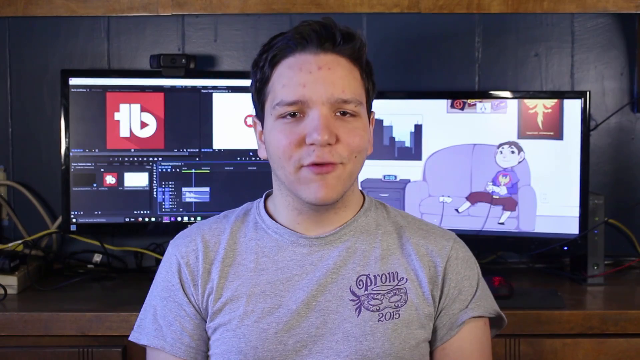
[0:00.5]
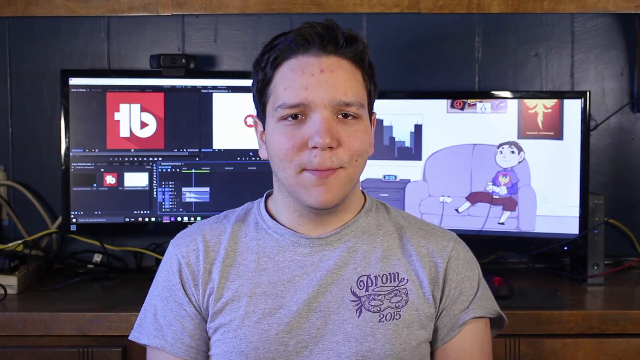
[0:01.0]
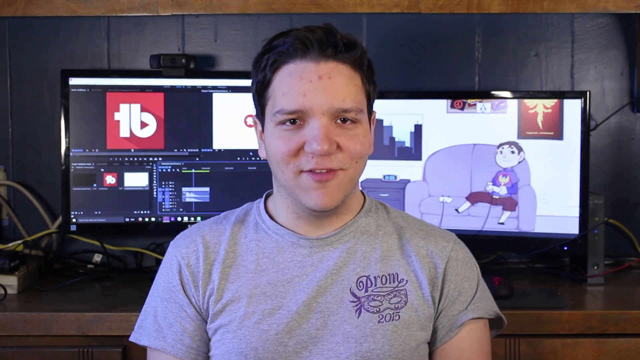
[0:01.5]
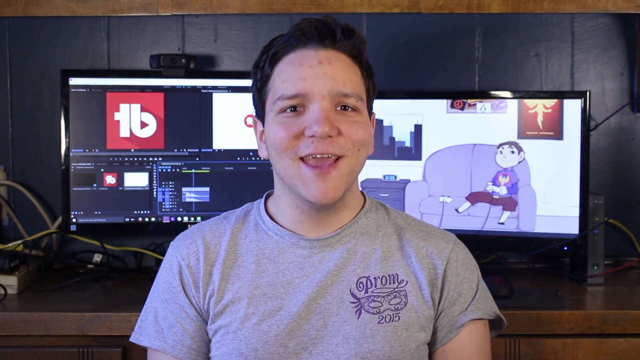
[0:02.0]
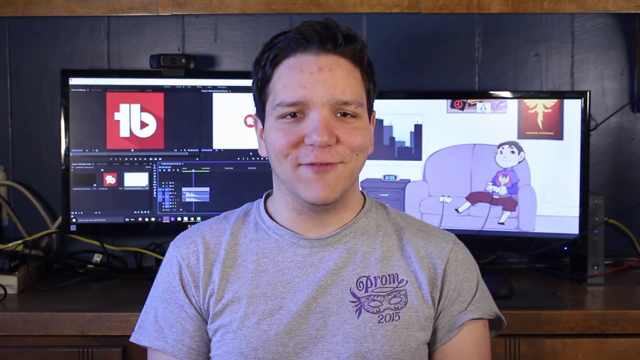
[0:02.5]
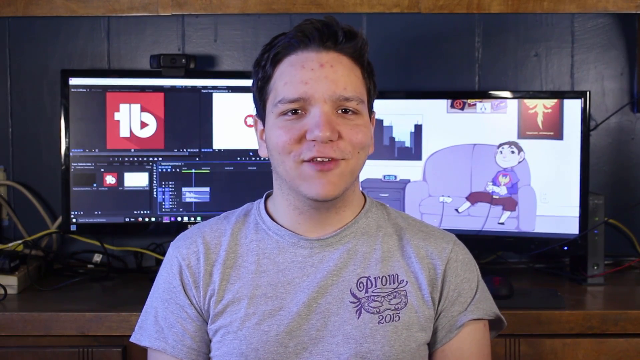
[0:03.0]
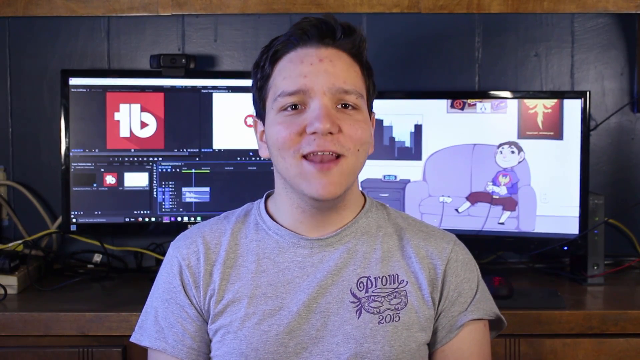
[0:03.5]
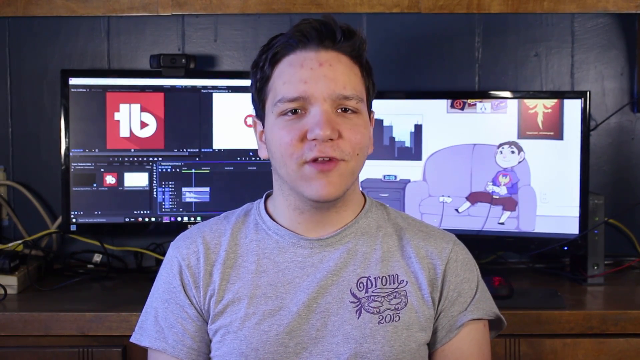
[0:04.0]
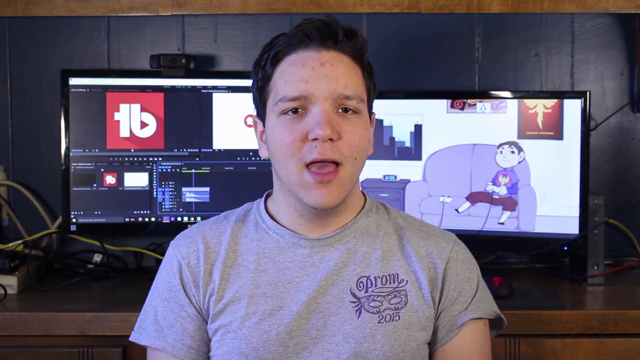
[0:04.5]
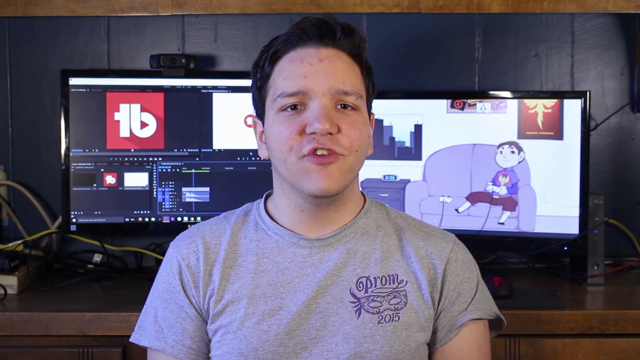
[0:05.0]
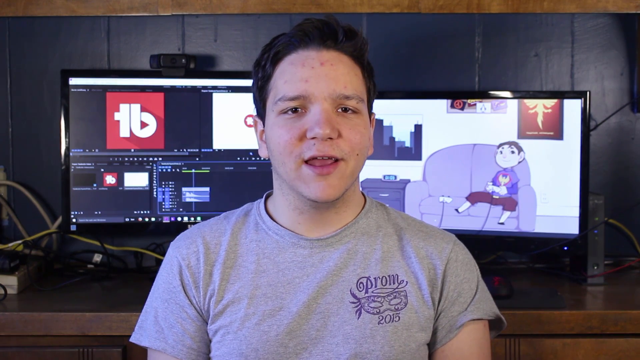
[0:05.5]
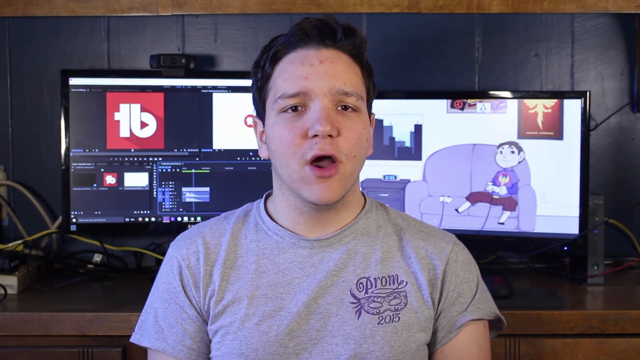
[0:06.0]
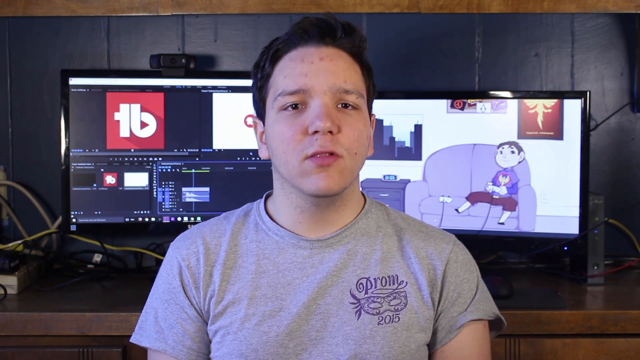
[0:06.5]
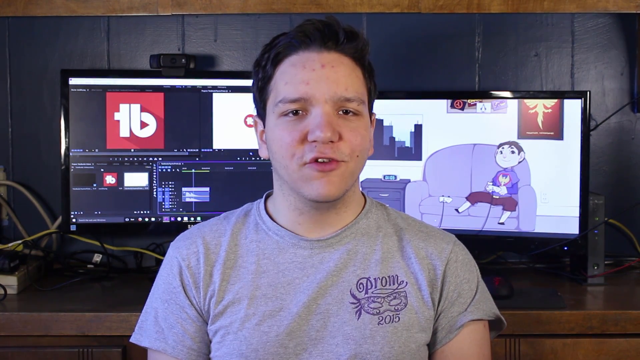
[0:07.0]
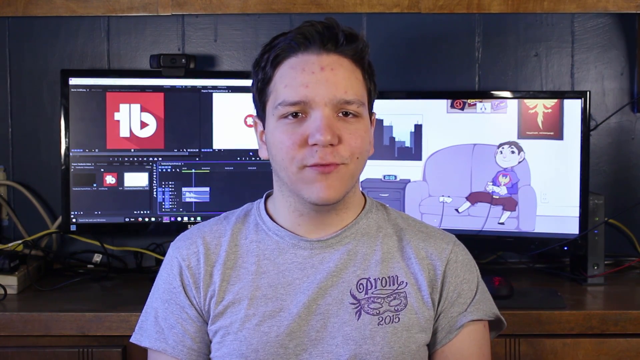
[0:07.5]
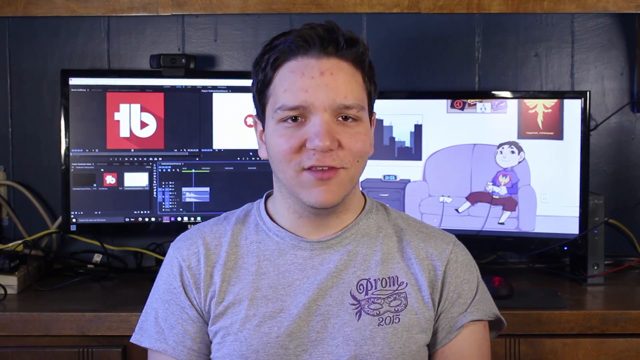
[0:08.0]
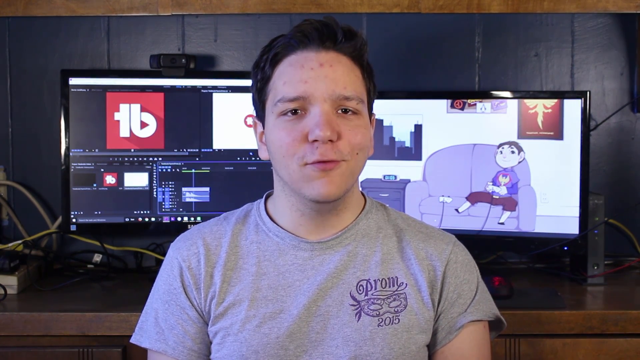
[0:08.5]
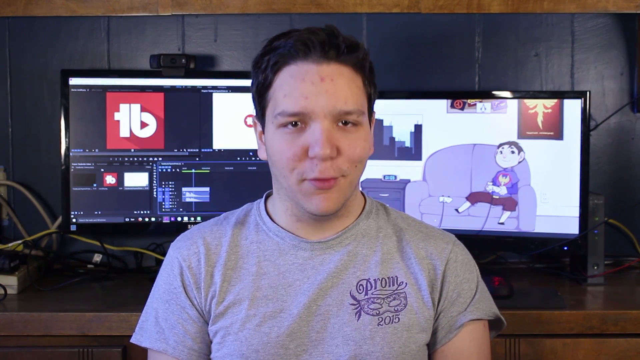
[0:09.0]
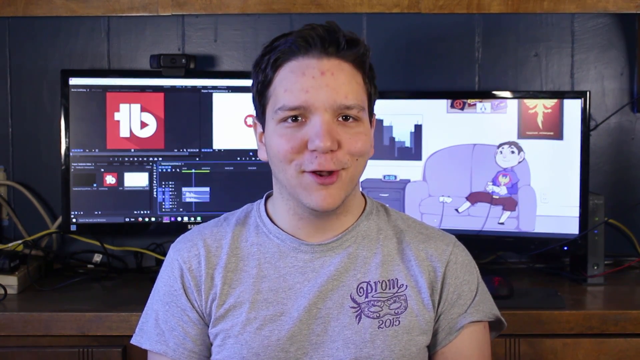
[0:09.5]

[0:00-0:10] Someone speaks to the camera. They wear a gray t-shirt and have brown hair and pale skin. Behind them are two monitors. One shows a cartoon of somebody sitting on a couch playing a video game, with posters behind them. The other monitor appears to show video editing software, with two videos being edited on the screen. One of the screens has a red logo on it. The screen then flips over and disappears into another graphic that says "tips and tricks".